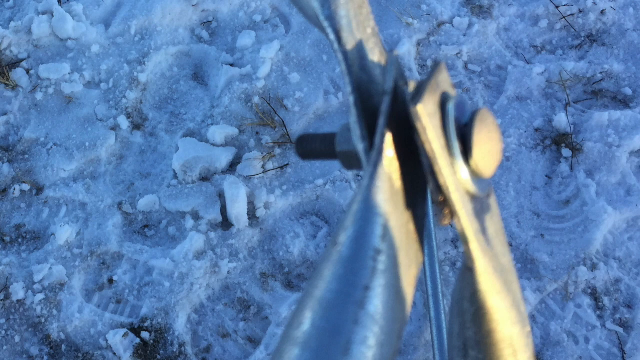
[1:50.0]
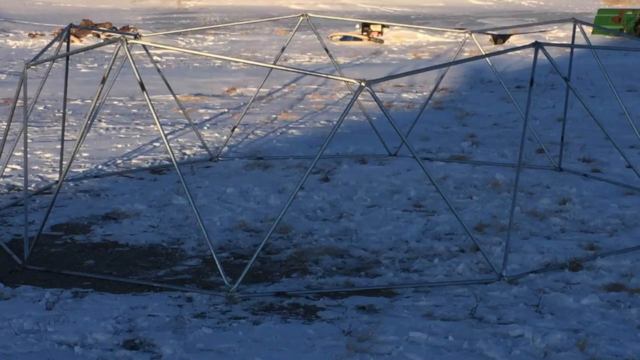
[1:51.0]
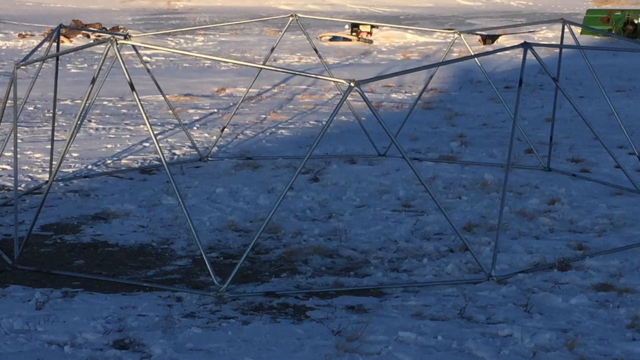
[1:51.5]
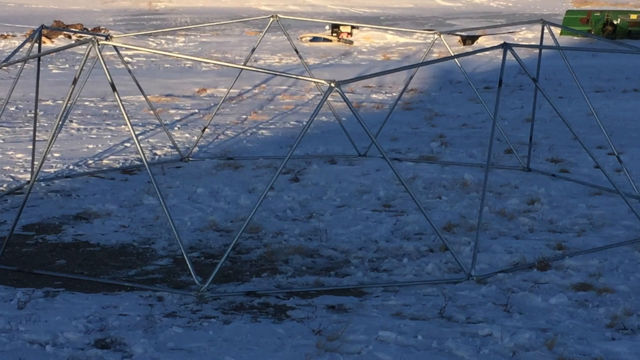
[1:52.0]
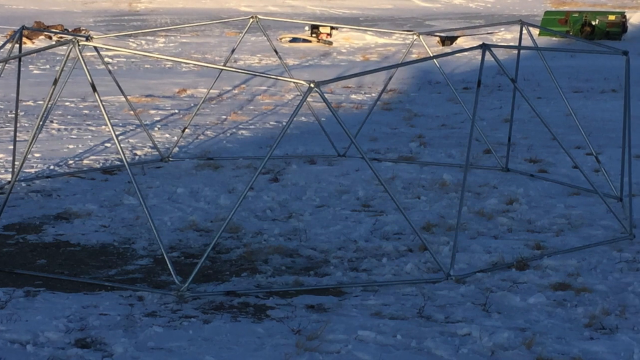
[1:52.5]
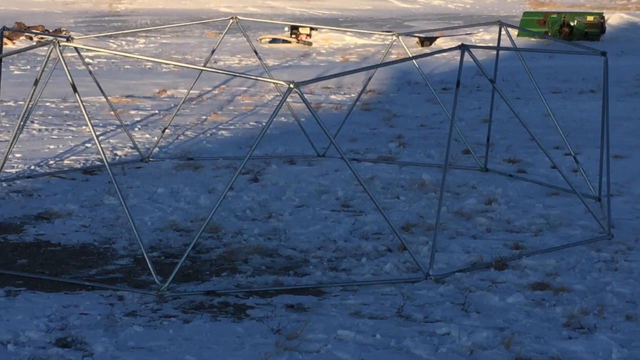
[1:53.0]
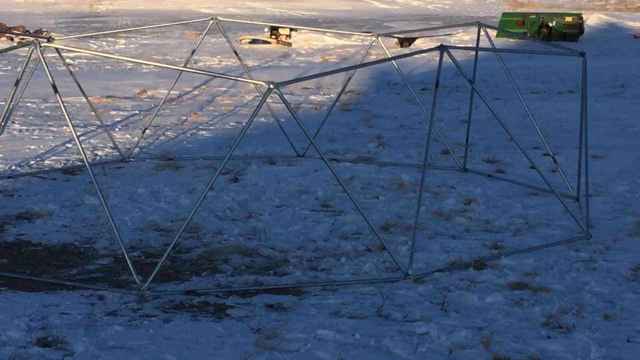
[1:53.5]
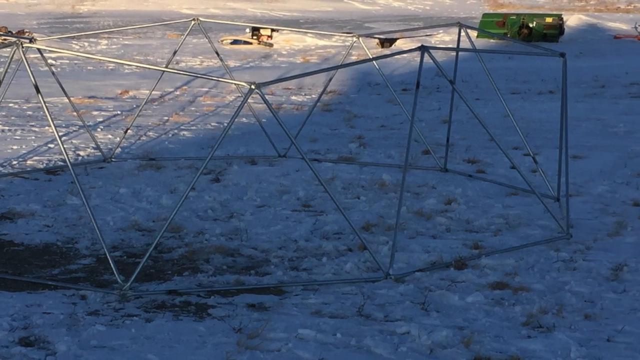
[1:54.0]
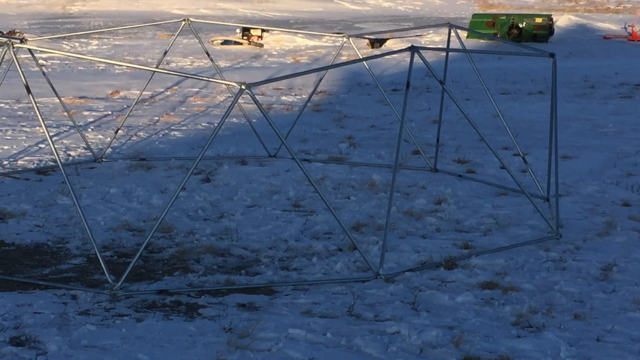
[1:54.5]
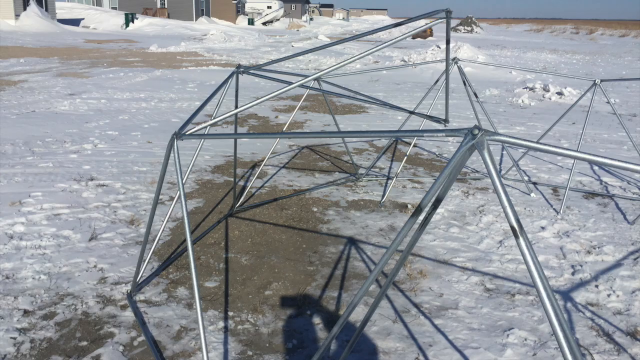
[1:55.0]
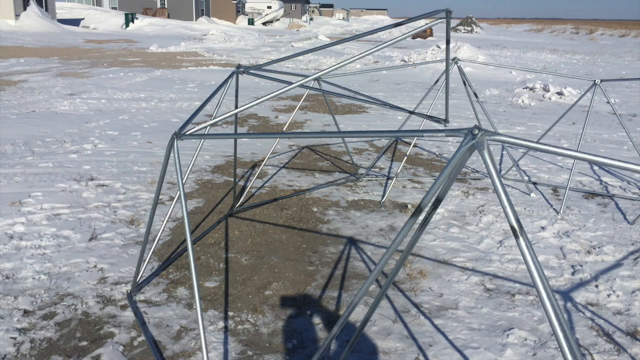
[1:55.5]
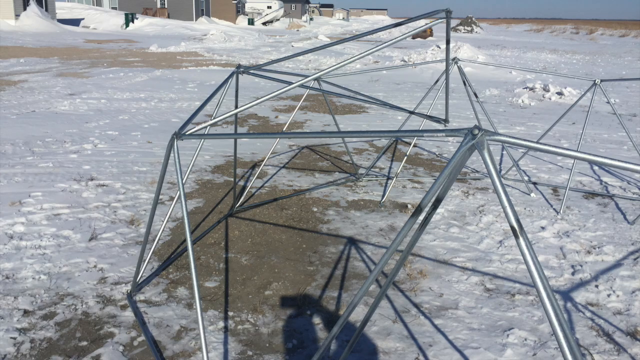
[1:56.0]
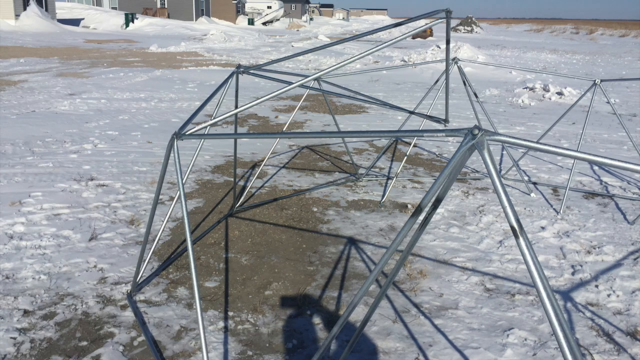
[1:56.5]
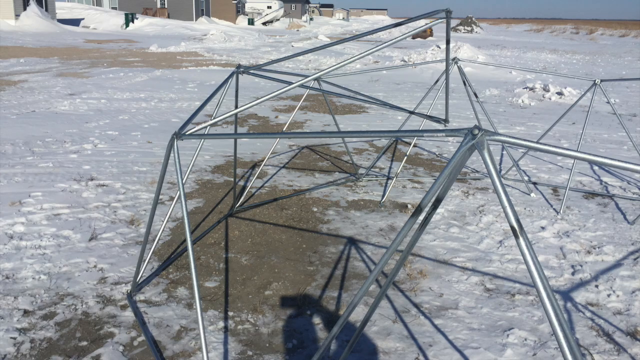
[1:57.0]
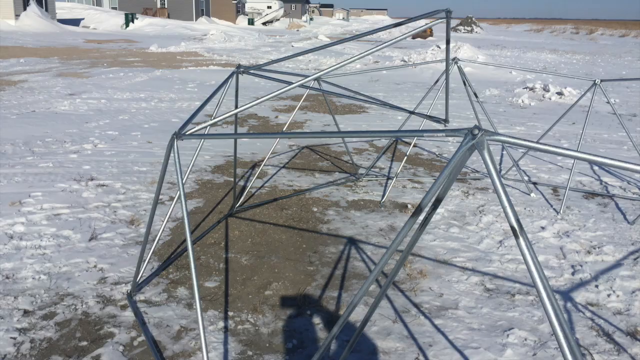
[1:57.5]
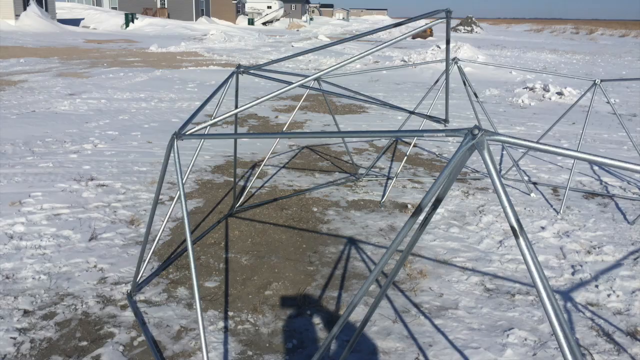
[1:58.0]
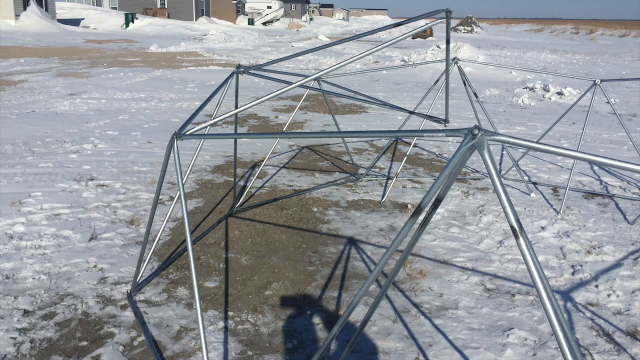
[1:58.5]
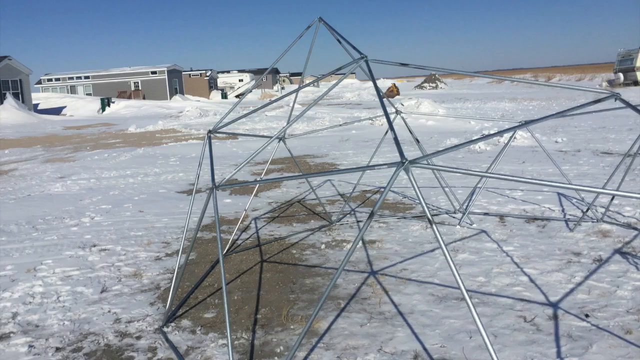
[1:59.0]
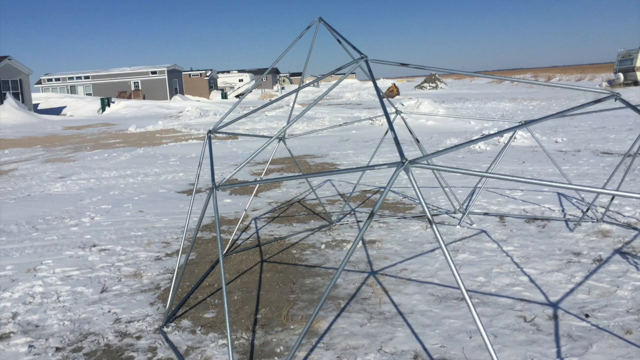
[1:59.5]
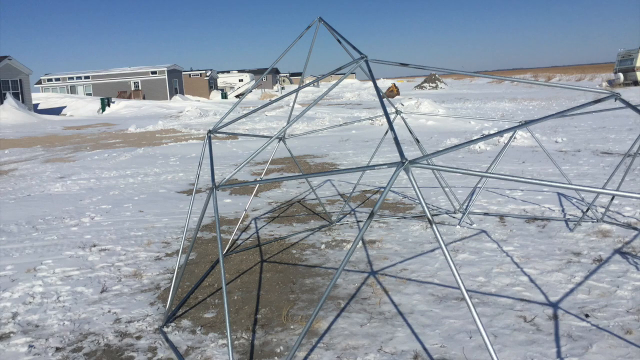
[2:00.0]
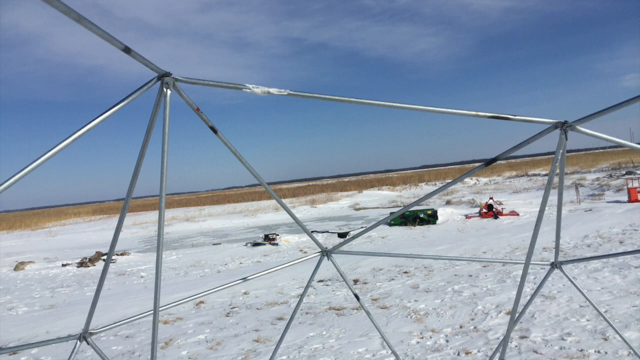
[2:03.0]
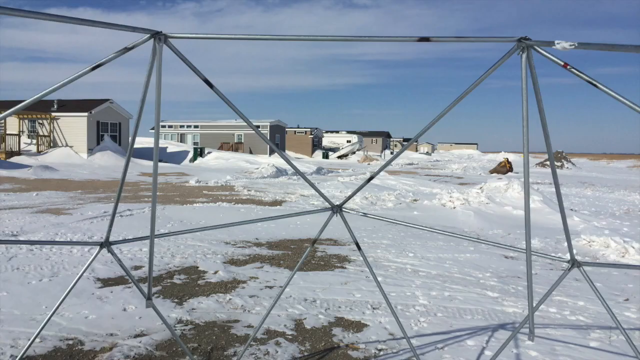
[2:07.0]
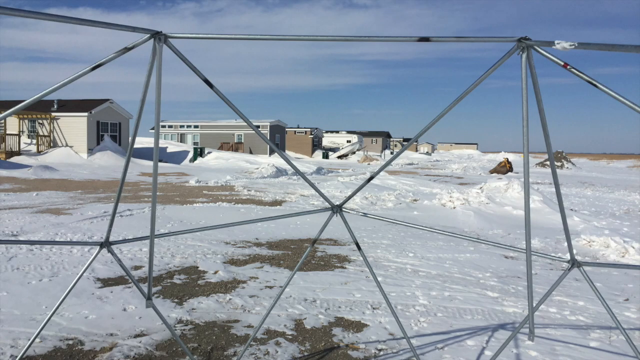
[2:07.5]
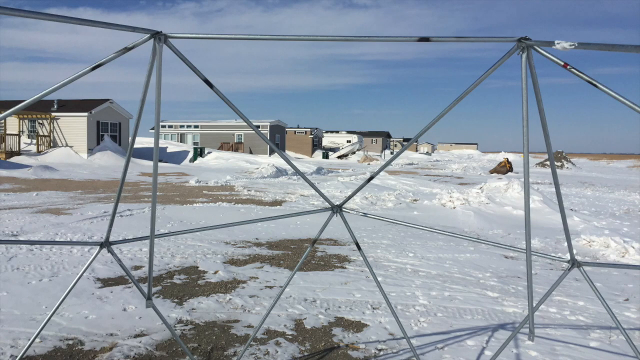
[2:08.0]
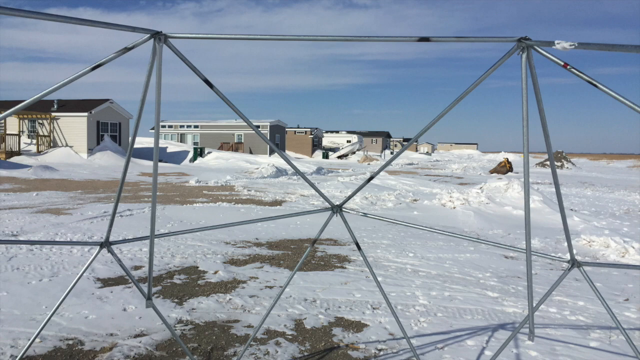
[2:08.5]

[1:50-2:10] The structure is really coming together, with more of the top pieces assembled and the structure getting taller. The scene is brighter, probably the following morning. More of the surrounding area is visible, including trailers in the distance that were not visible before. The environment is unclear, possibly agricultural.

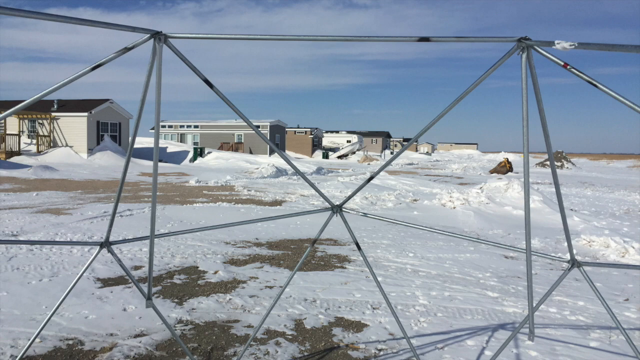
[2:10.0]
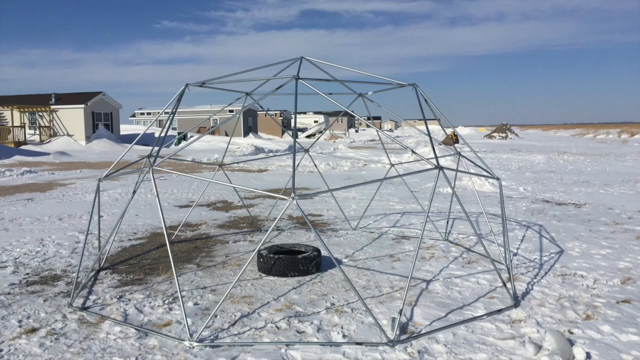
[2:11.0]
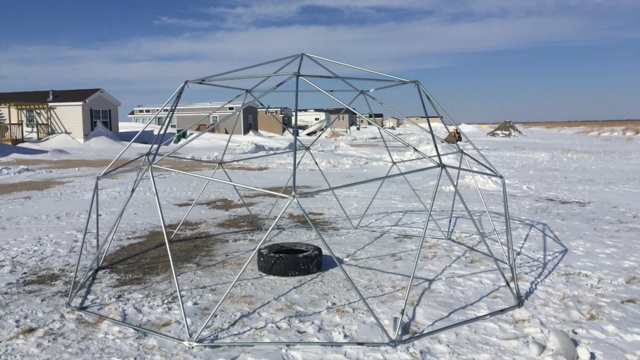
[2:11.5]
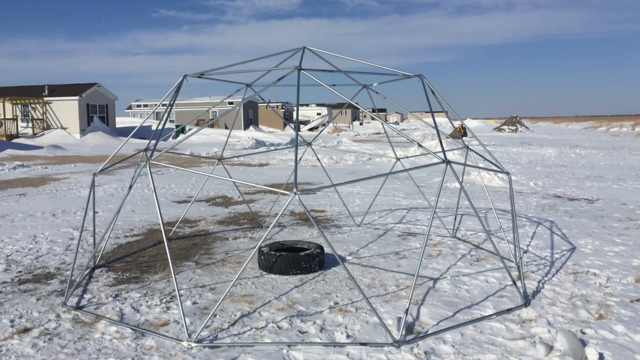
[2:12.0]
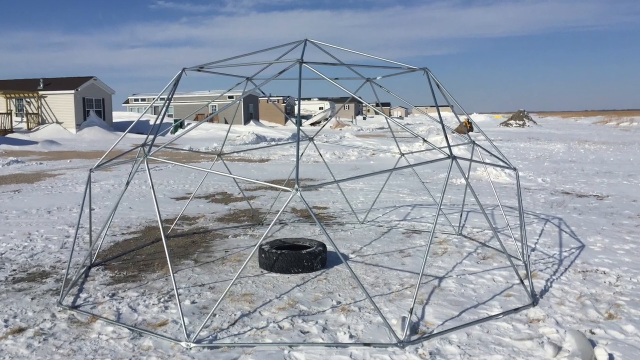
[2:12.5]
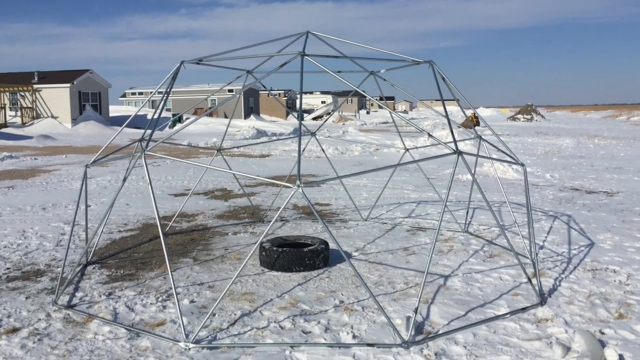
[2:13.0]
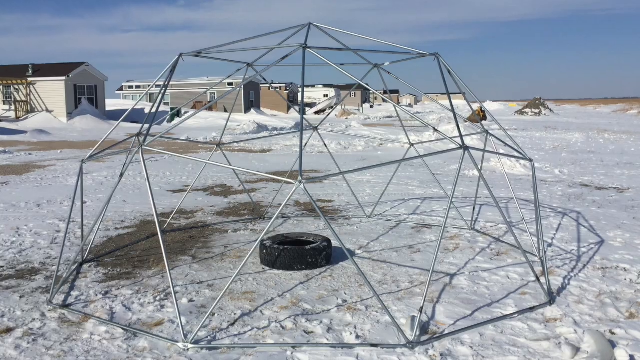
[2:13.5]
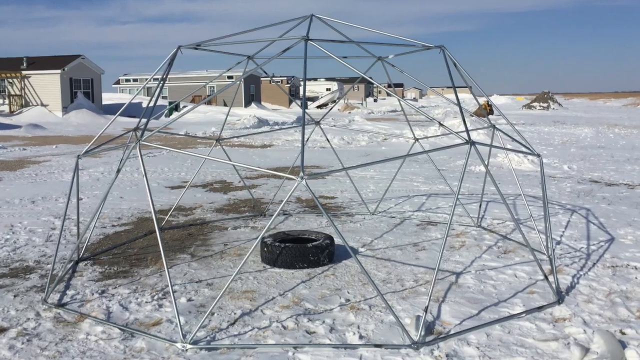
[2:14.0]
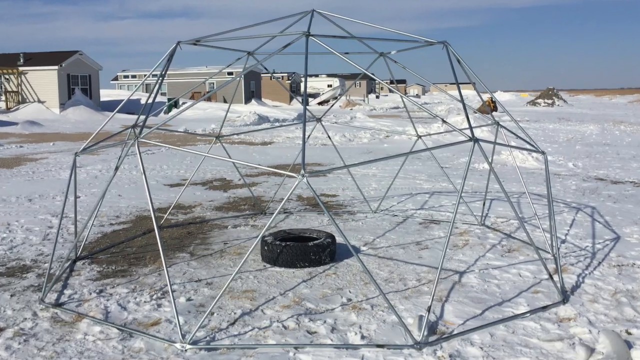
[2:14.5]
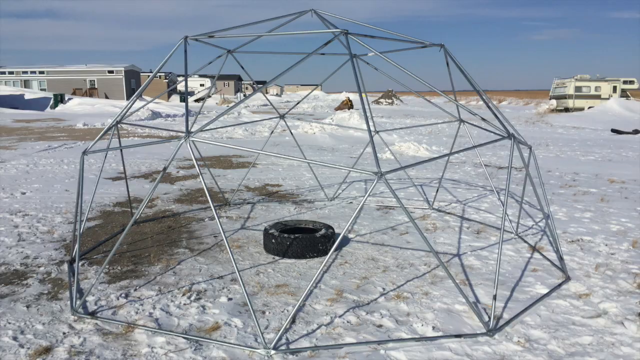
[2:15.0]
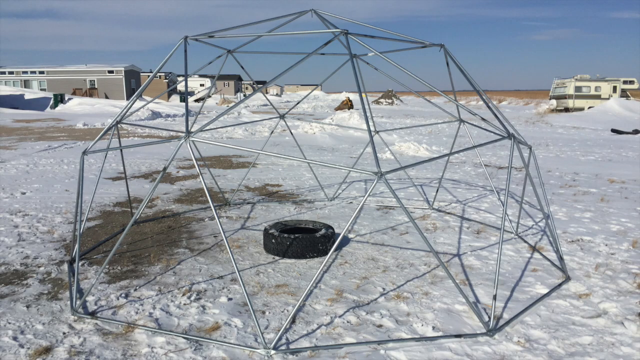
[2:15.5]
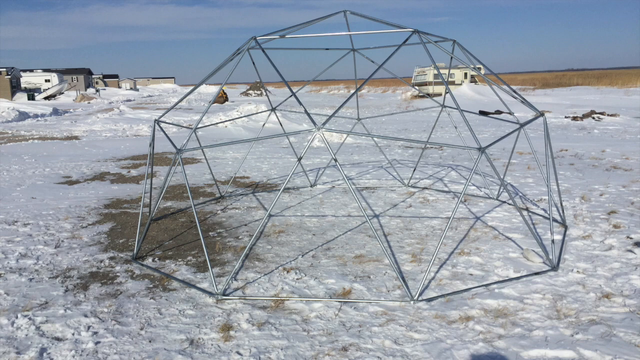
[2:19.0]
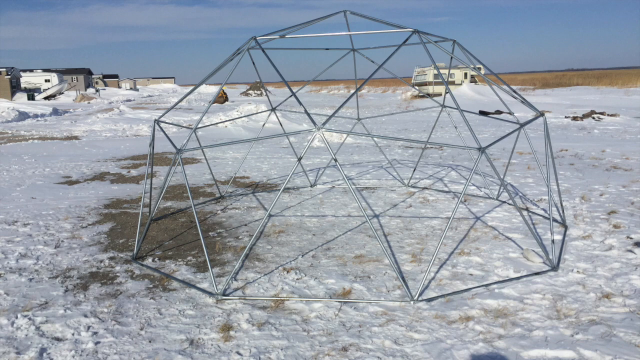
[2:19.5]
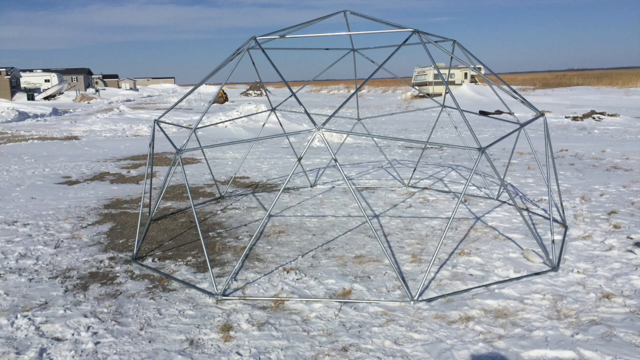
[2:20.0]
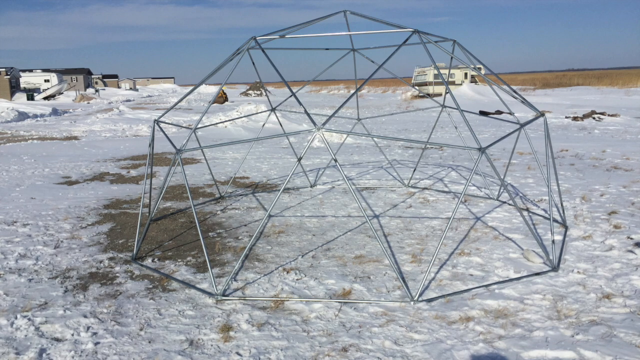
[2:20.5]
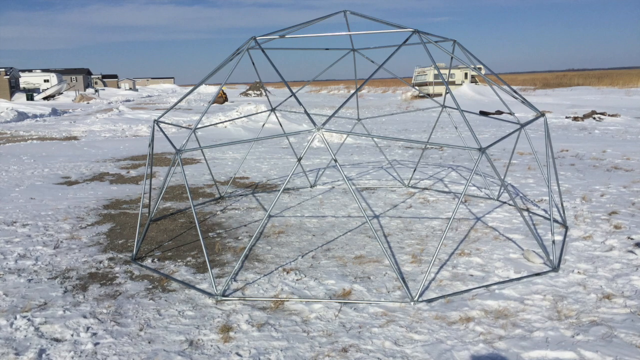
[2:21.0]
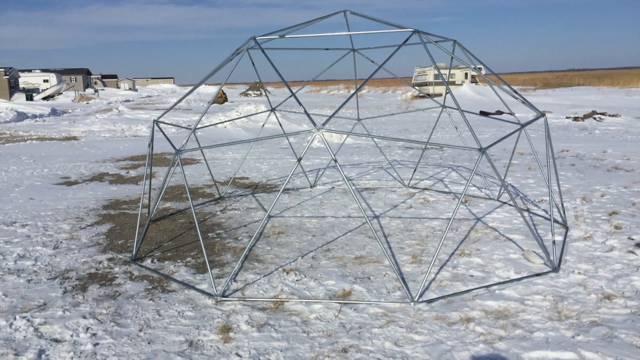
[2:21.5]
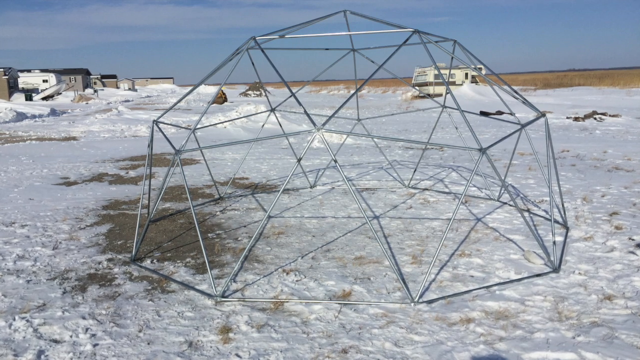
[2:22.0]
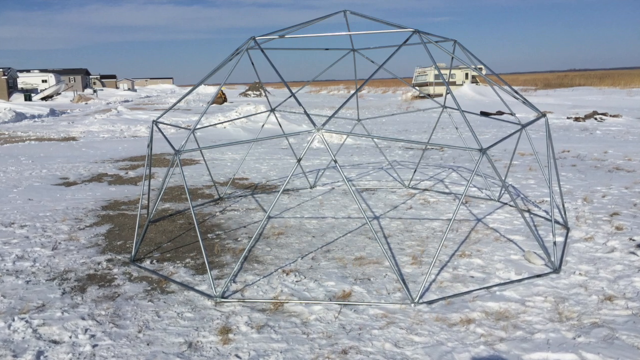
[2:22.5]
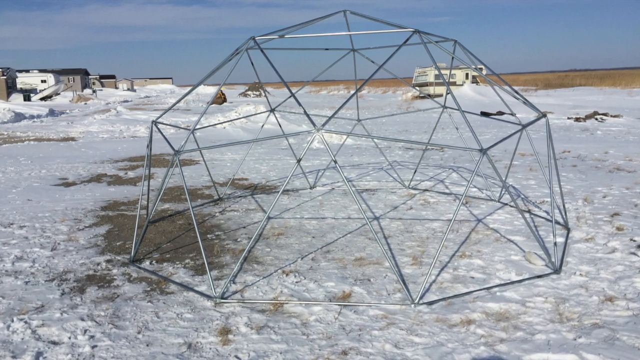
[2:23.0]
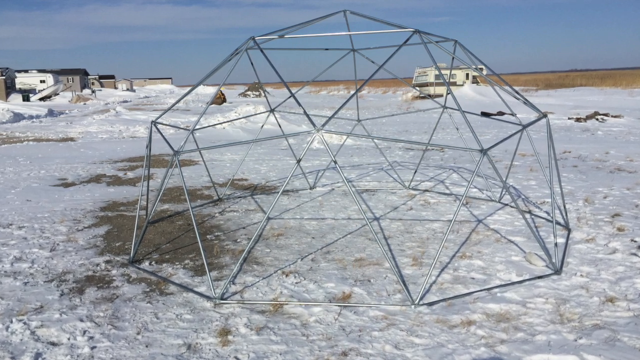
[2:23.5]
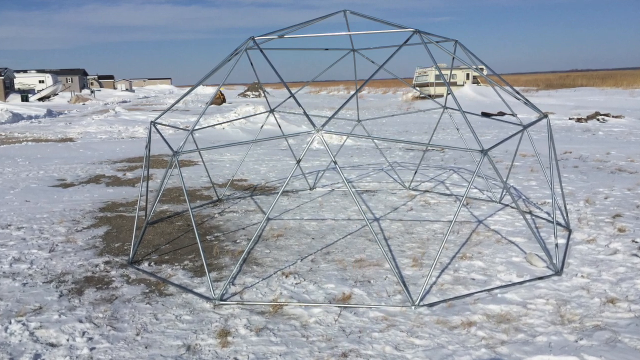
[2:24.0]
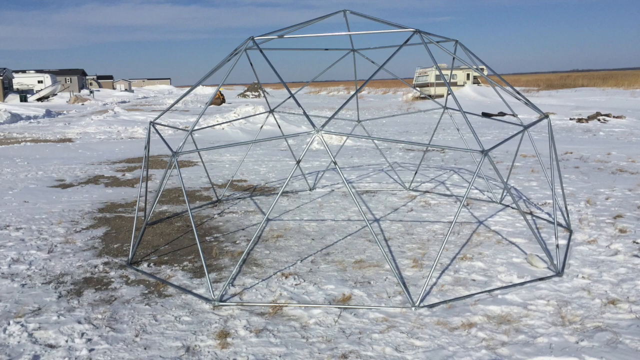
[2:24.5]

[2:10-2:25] The structure is just about completely assembled. There is a tire in the middle of it, its purpose unclear. The sun is shining a little brighter, probably a second day of work. In the background are a field, some trailers and something like a camper. The snow is kind of melted a little or worn down where people walked while building.